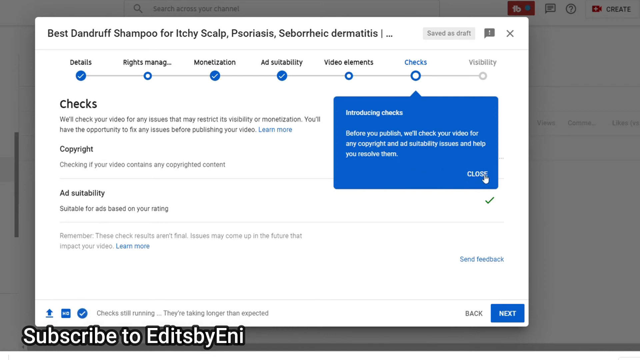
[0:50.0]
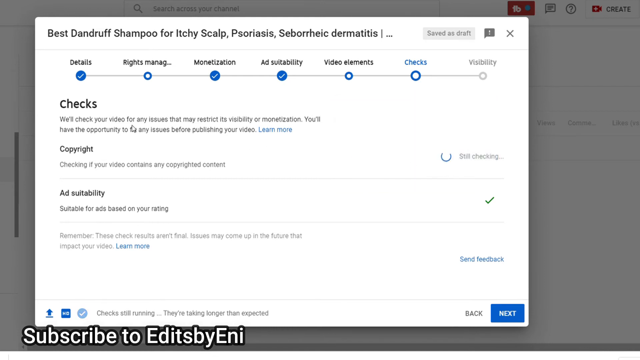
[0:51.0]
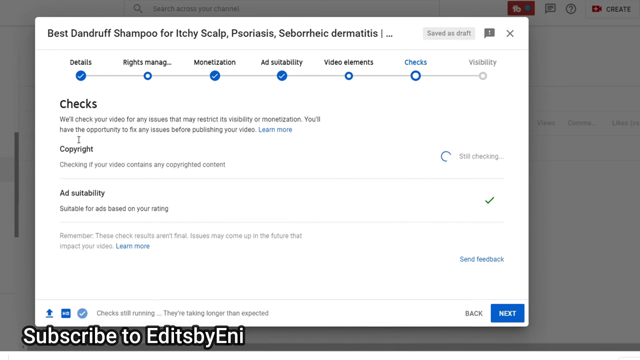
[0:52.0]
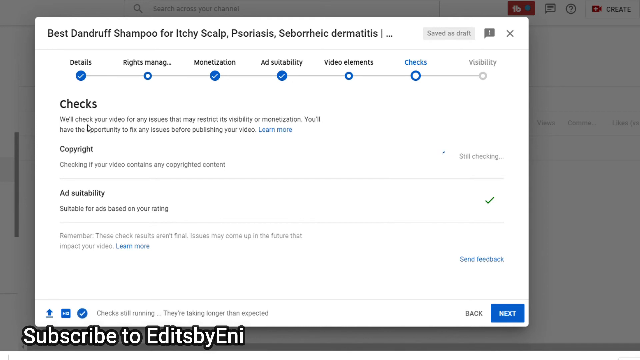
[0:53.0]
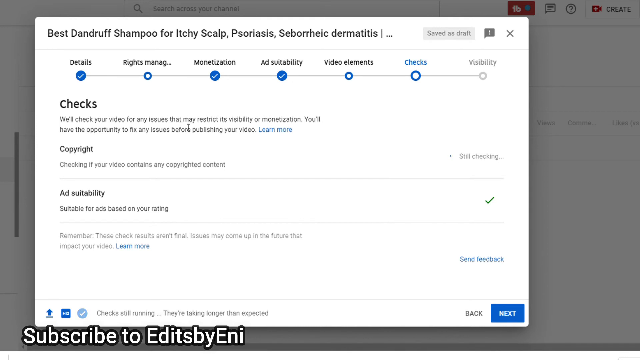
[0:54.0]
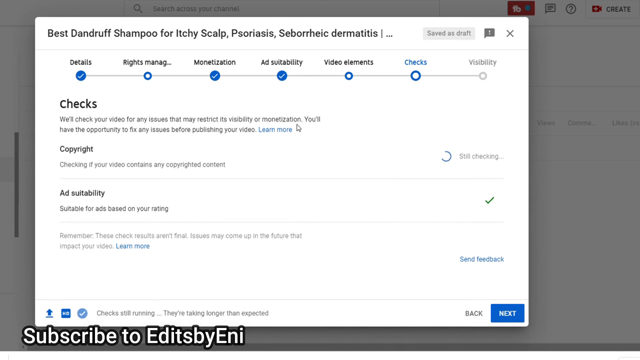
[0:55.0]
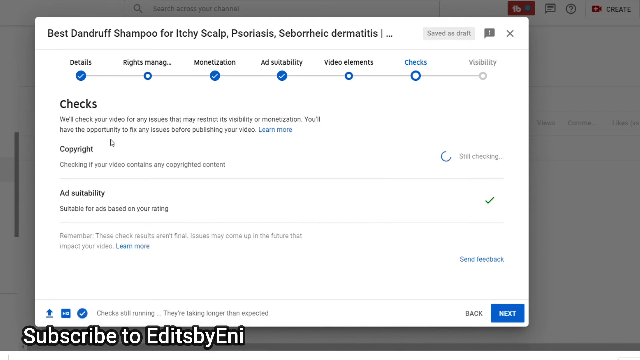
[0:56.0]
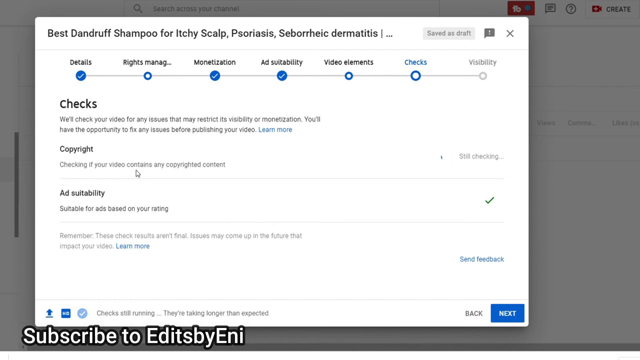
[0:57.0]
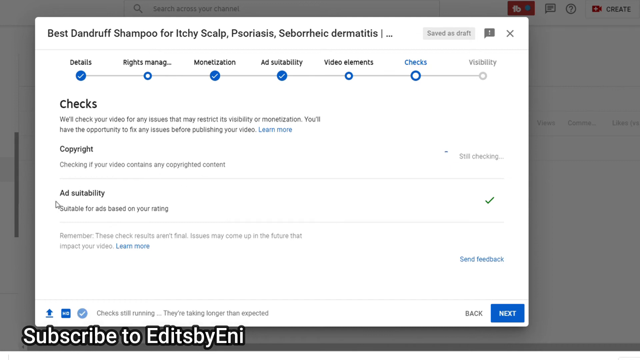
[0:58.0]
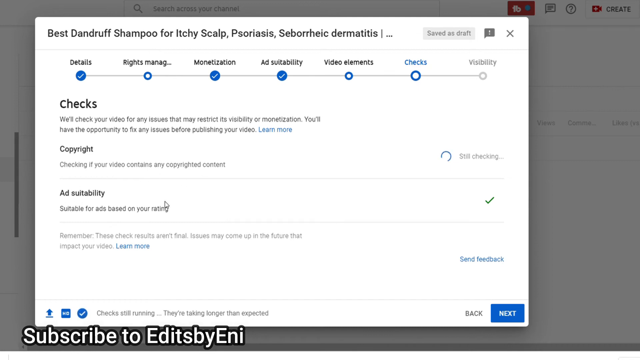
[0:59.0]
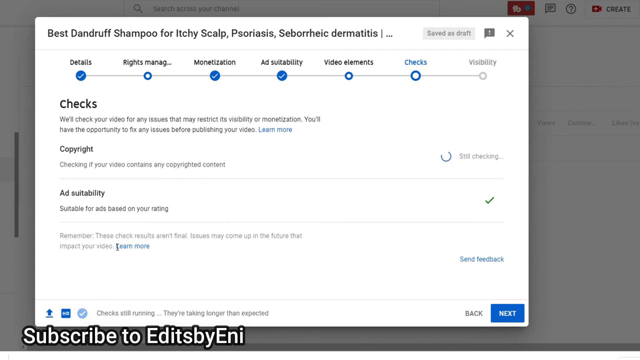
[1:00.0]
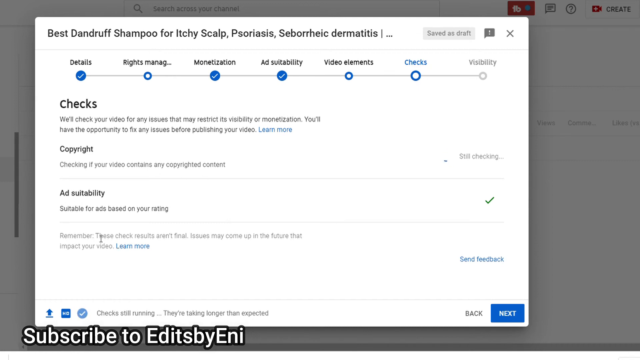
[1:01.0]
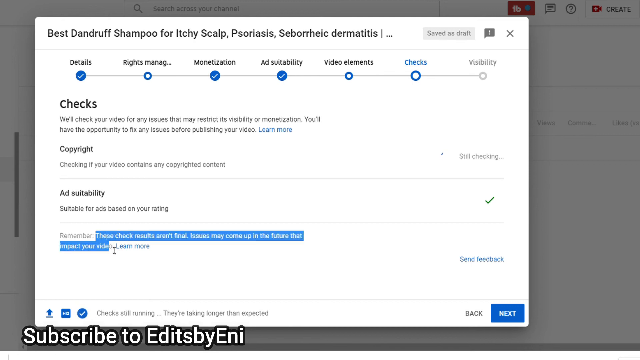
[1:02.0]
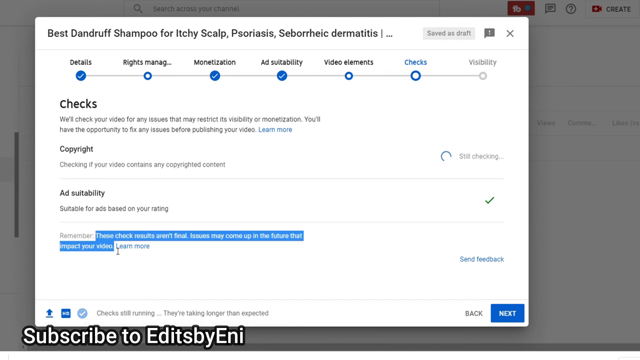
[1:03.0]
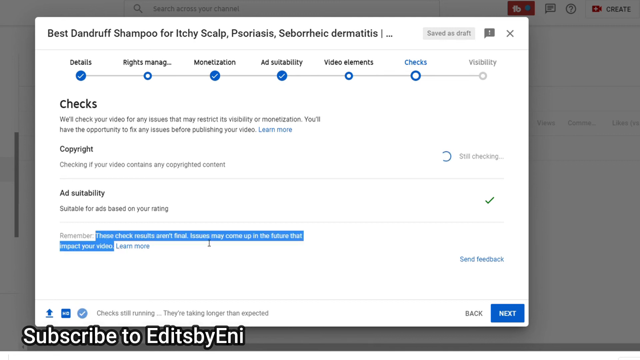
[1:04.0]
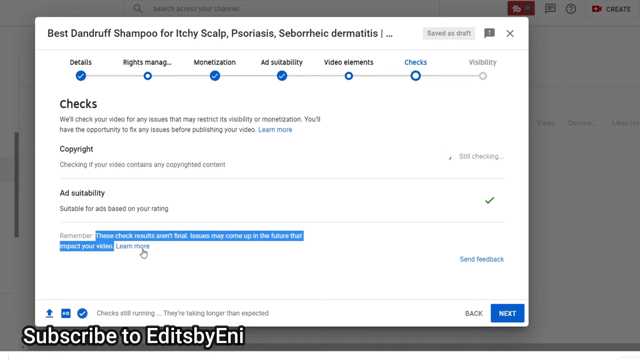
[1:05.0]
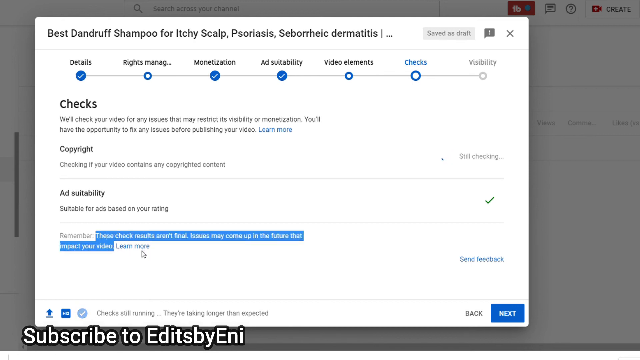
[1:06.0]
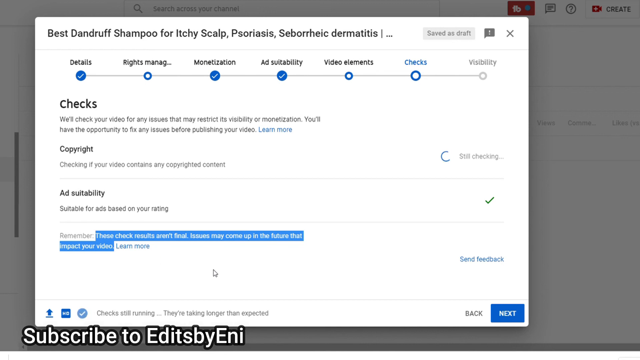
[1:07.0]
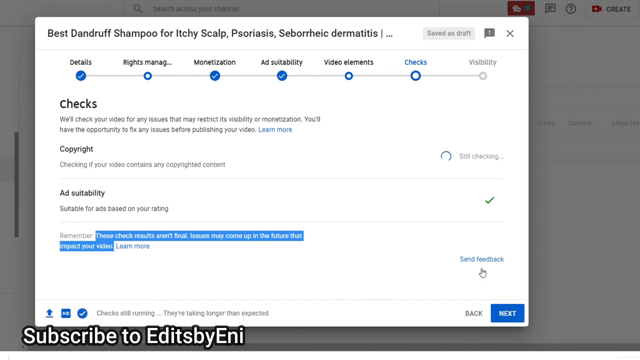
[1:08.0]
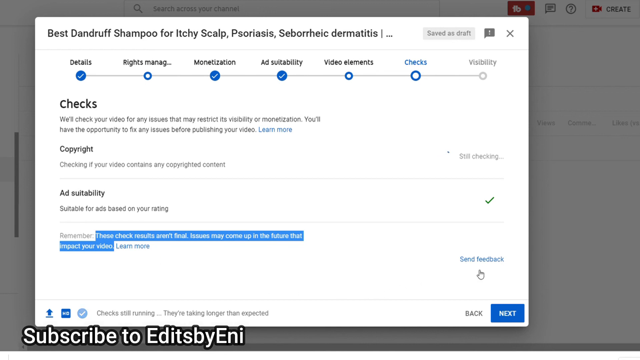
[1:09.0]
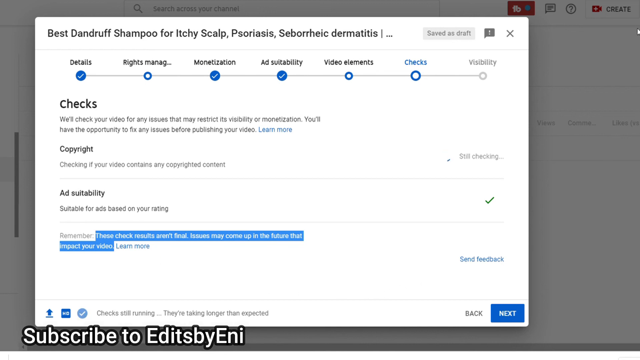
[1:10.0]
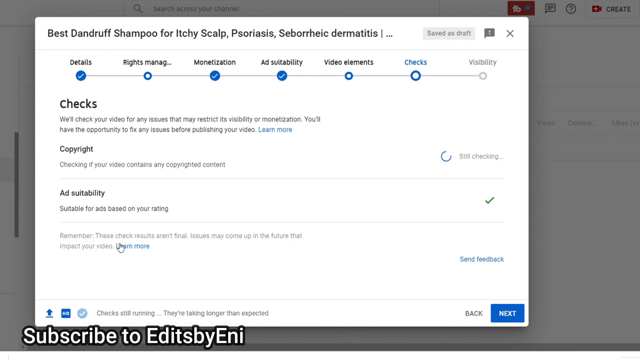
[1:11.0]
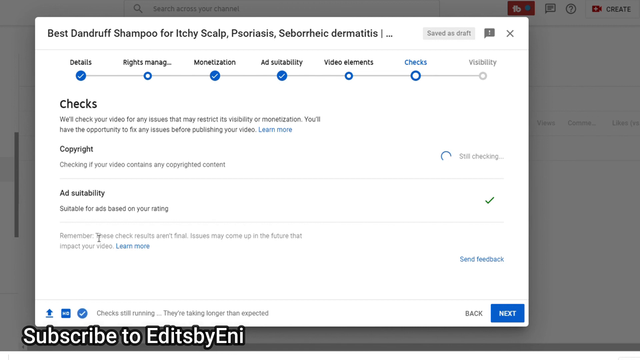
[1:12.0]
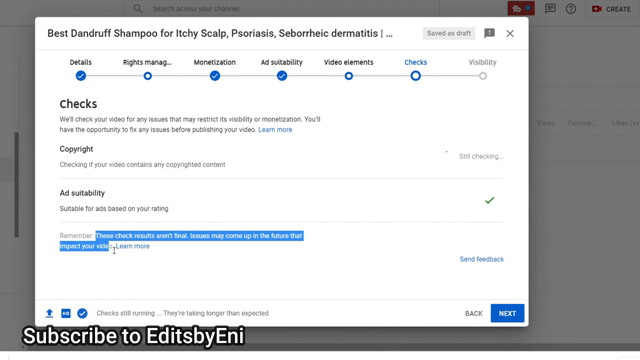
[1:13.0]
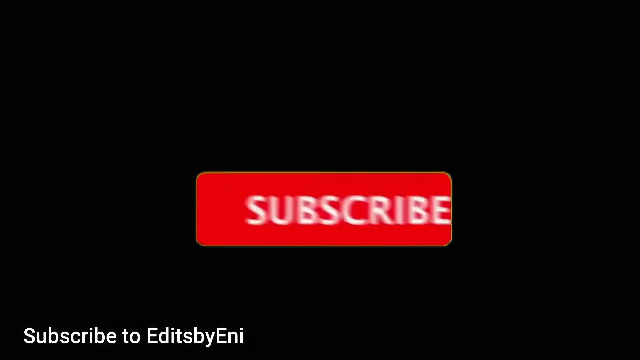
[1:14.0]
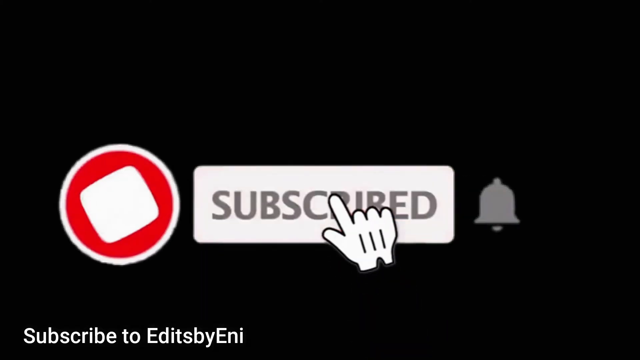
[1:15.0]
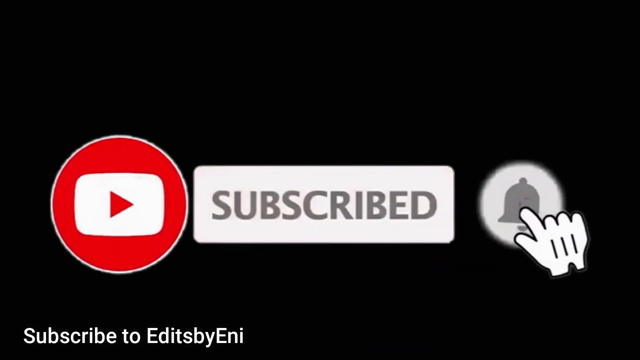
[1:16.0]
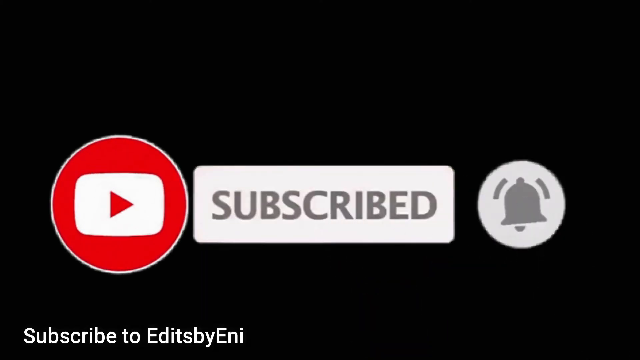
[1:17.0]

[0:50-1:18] A white dialog box is headed "best dandruff shampoo for itchy scalp, psoriasis, etc." Below it is a timeline with blue checkpoints and seven options, of which the sixth, the "checks" page, is open, with contents related to checks shown below. A "still checking" loading indicator is loading in the copyright section. The mouse hovers over the checks contents from right to left, as if reading. The "remember" section at the bottom is highlighted with the cursor, and there is a "learn more" hyperlink next to the text. The mouse then hovers over a "send feedback" hyperlink to the right of the remember section, and the remember section is highlighted again. The screen then closes and a black screen appears showing a subscribe button with white text on a red background and a hand clicking it. After the hand clicks subscribe, the rectangle turns to a white background with grey text, a YouTube icon on a red circle appears to its left and a bell icon to its right. The hand clicks the bell icon, and the bell rings.